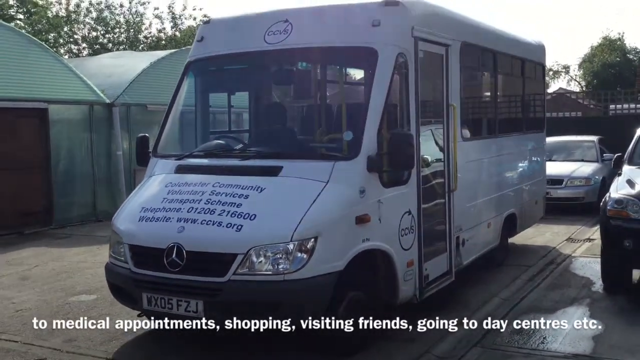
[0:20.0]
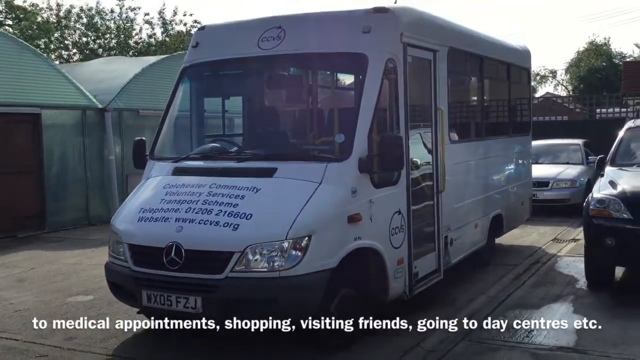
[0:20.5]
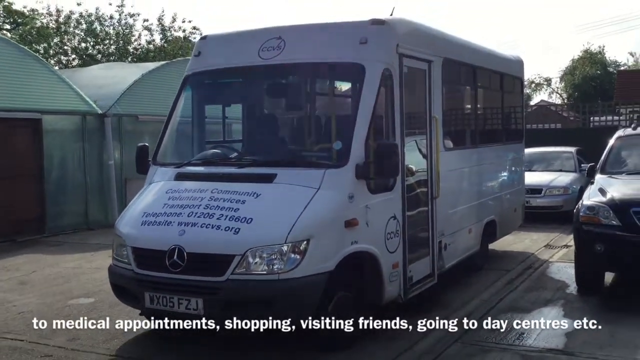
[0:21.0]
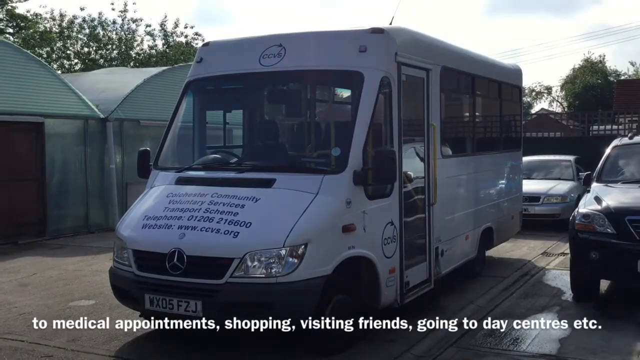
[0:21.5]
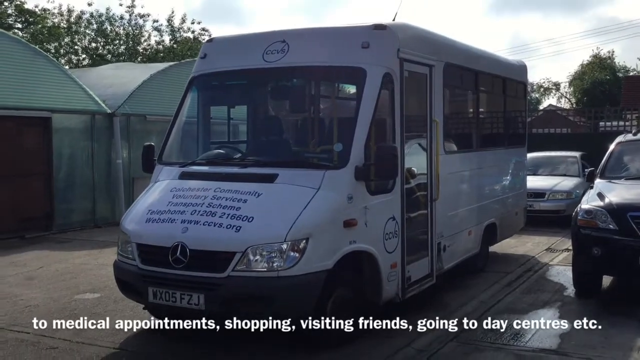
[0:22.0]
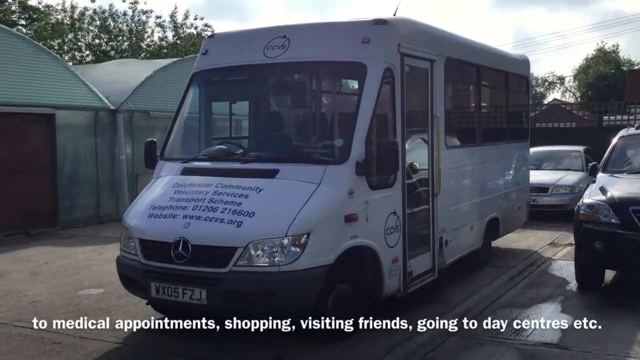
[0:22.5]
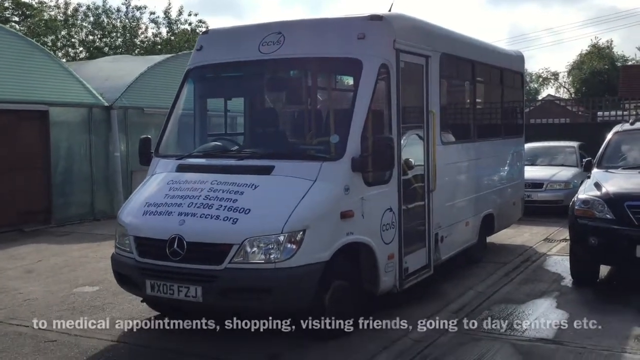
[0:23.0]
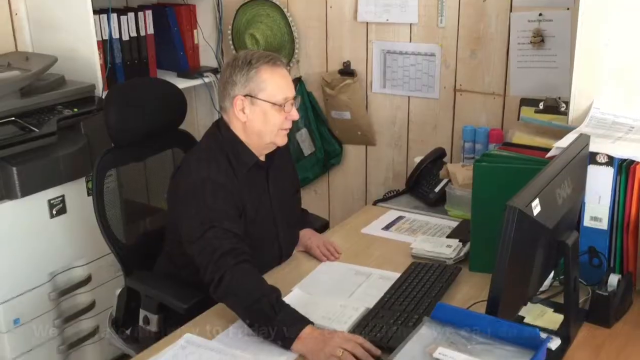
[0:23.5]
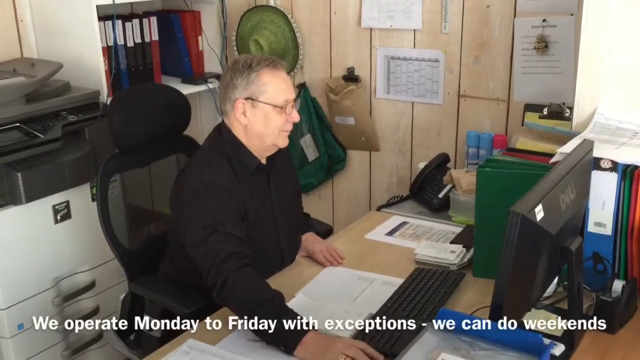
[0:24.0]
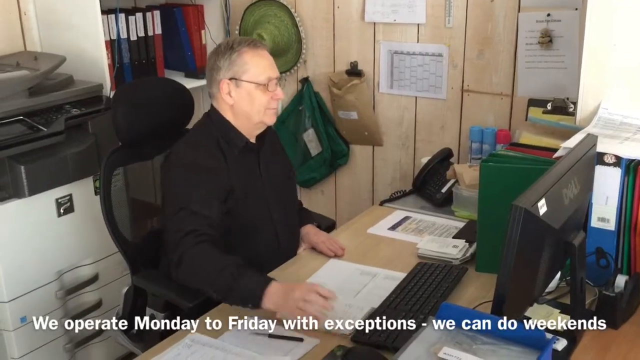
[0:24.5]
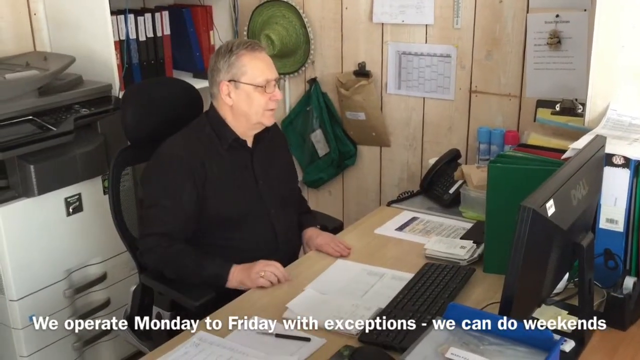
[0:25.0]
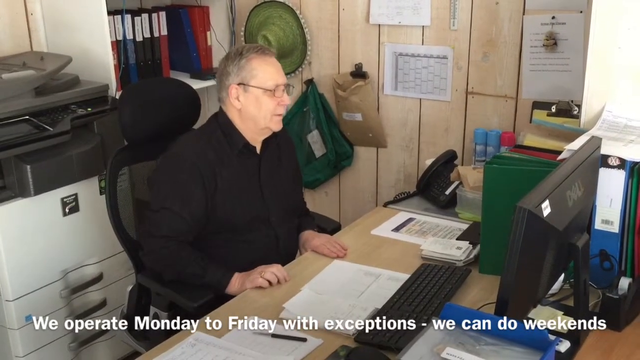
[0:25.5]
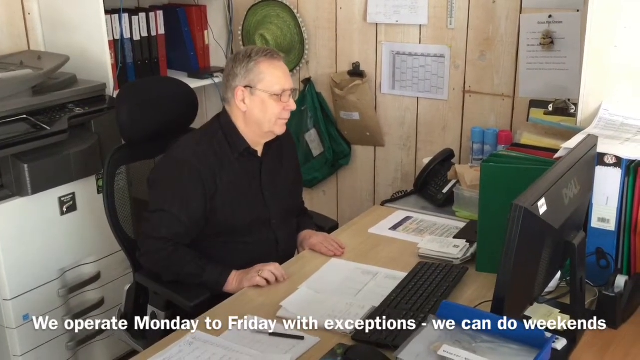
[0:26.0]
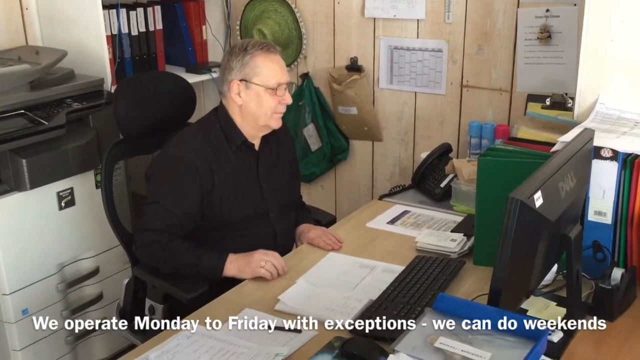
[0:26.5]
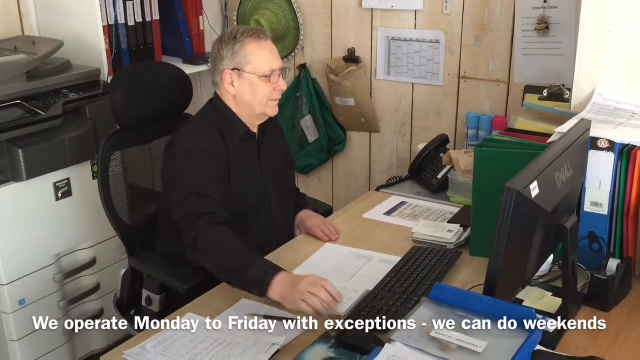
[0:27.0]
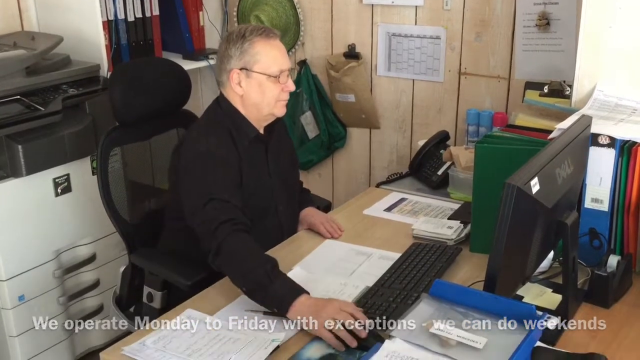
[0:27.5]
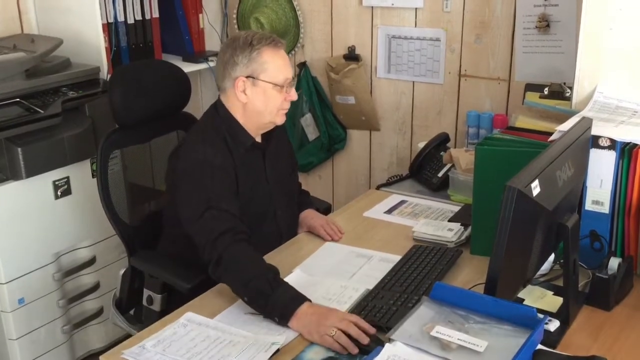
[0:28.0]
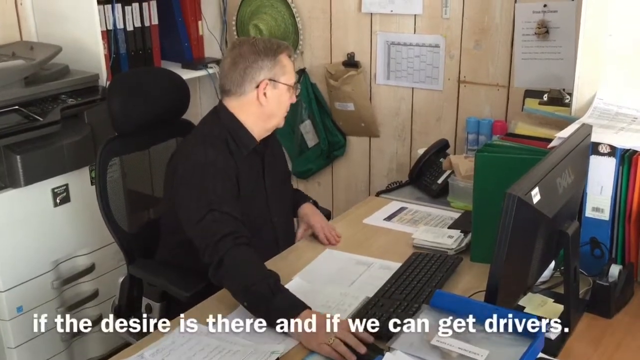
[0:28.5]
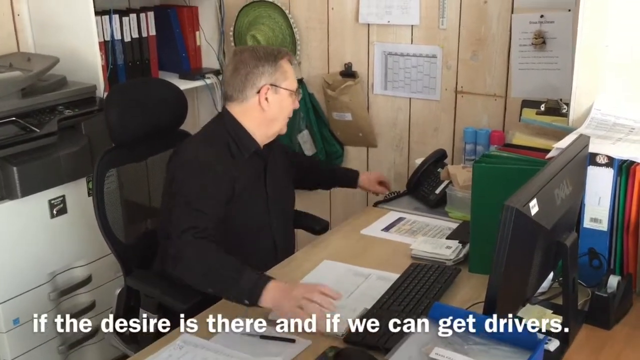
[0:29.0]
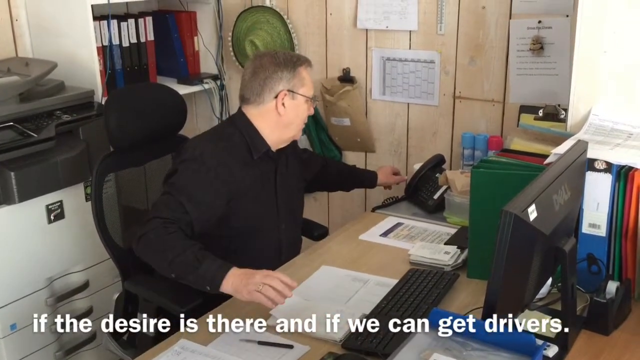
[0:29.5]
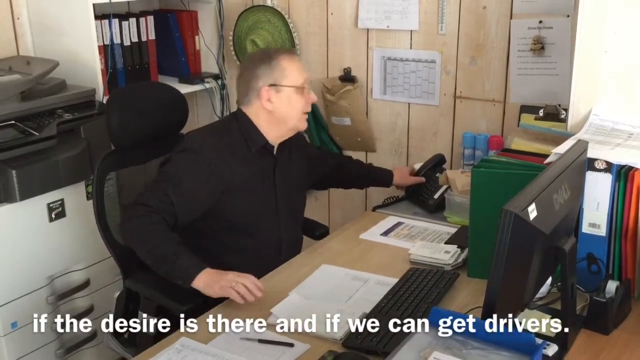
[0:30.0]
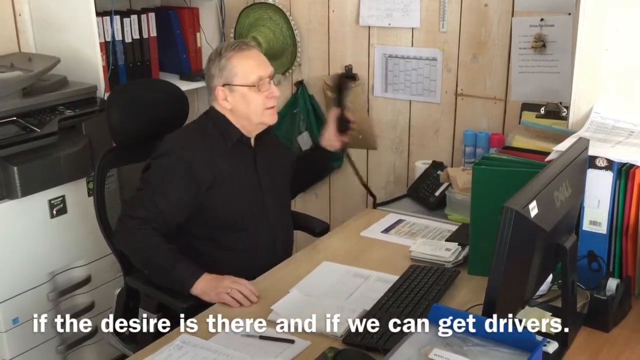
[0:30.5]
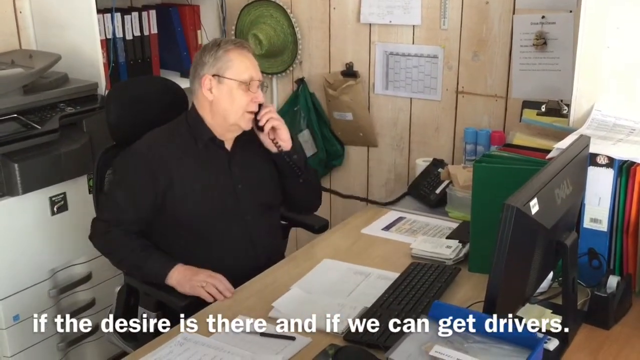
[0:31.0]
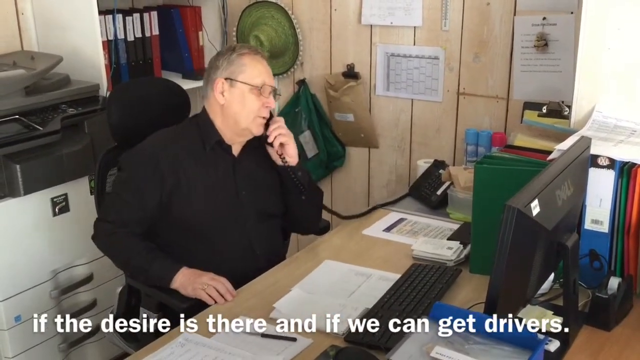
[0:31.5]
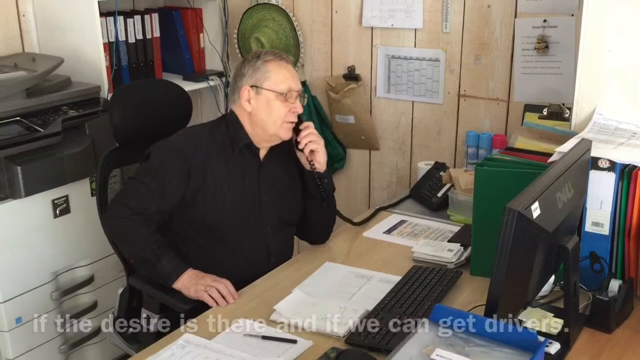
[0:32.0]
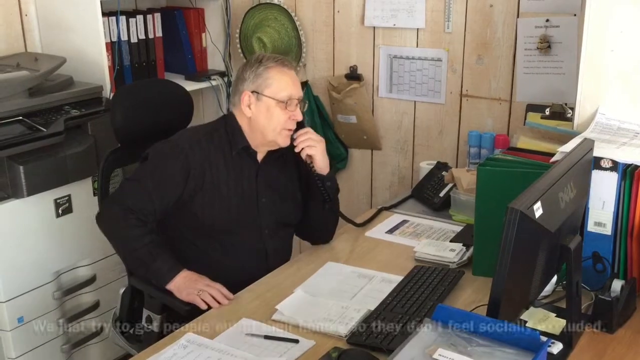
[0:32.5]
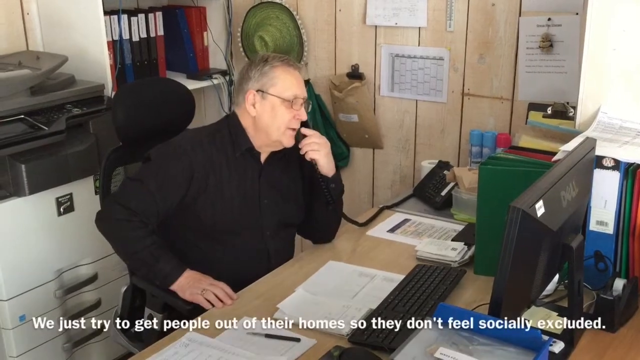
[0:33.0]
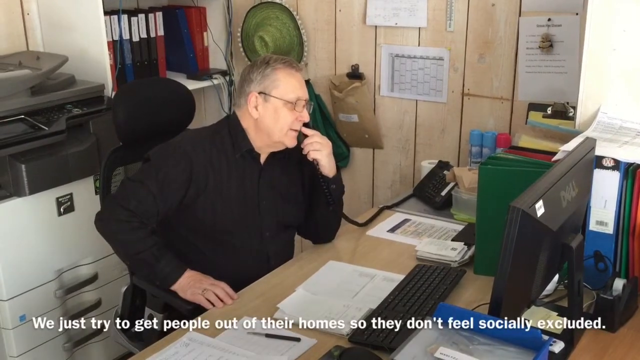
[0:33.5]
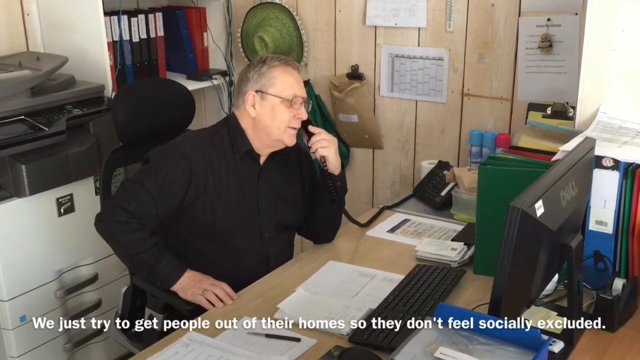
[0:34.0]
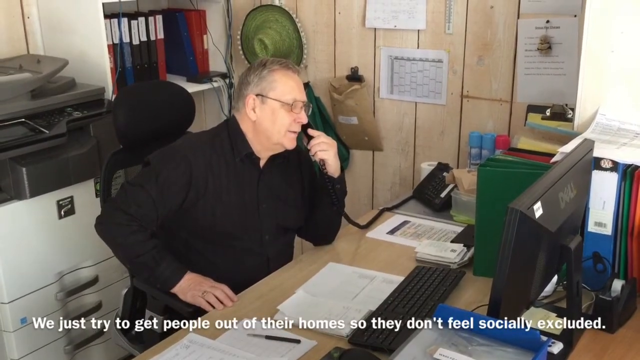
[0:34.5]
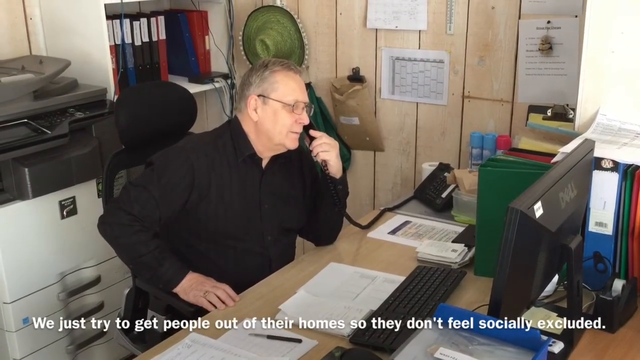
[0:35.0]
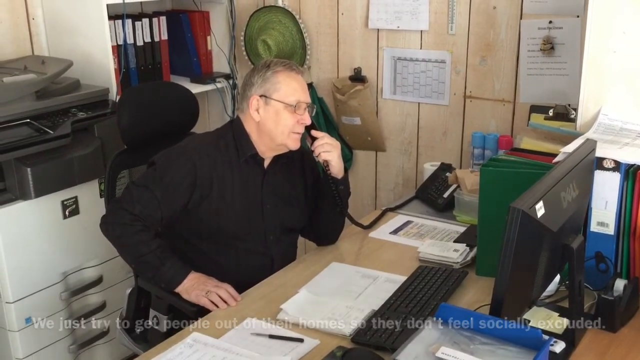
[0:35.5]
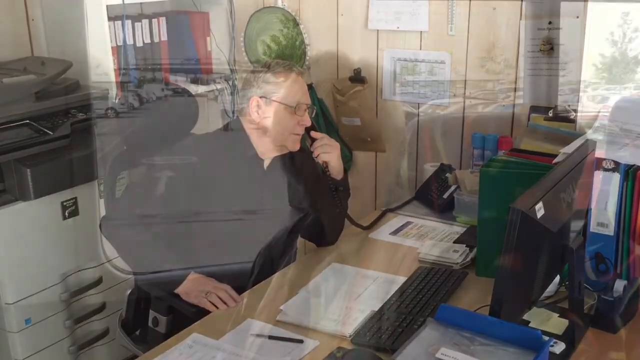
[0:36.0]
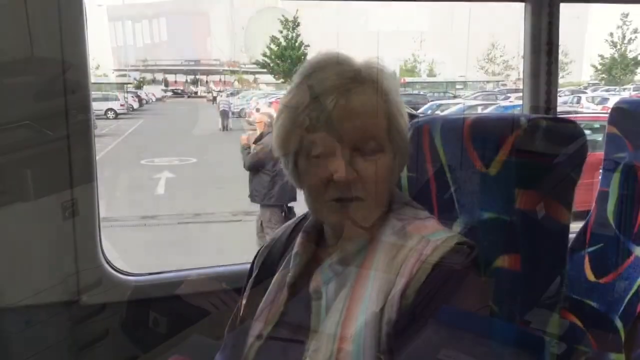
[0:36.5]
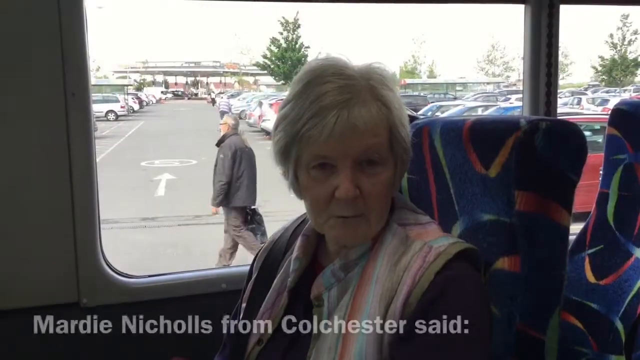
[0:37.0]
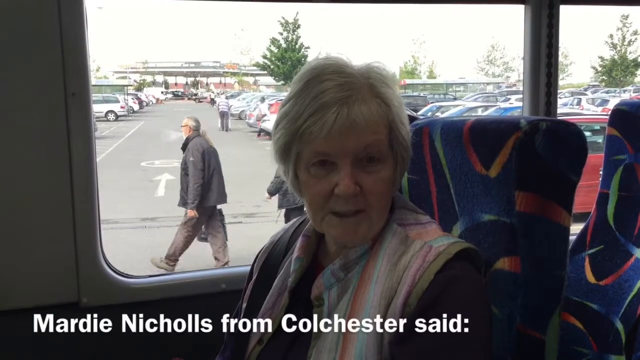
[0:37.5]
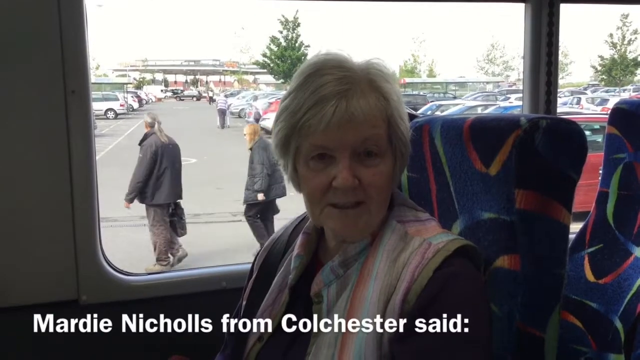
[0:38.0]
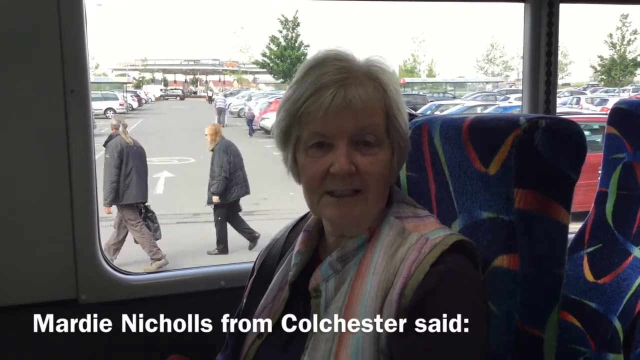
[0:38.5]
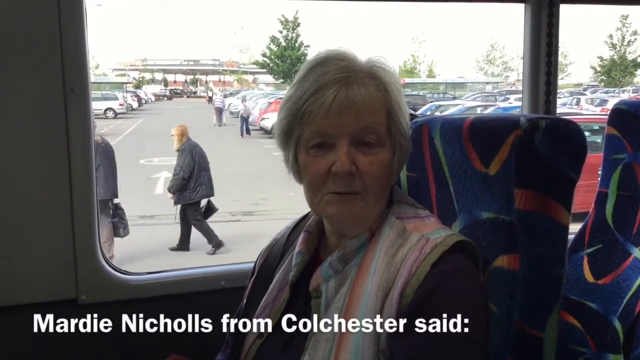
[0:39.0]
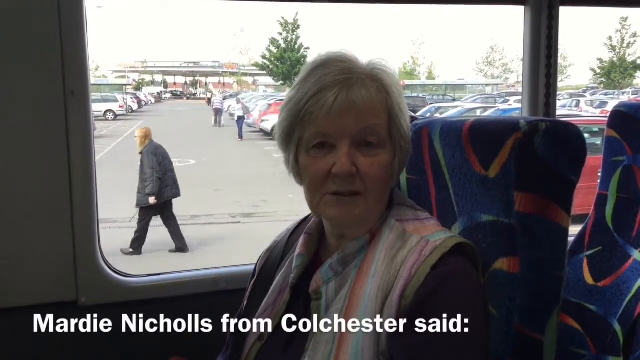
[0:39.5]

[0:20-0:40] A large, white, rectangular Mercedes Sprinter van is parked on a small street. Text on the front hood reads "Colchester Community Voluntary Services Transport Scheme", followed by the telephone number "012-062-16600" and the website "www.cvs.org". White text at the bottom of the screen reads "to medical appointments, shopping, visiting friends, going to day centers, etc." The scene changes to an older man with glasses and grayish brown hair sitting at a desk, working on a computer. He wears a black button-down shirt. He moves the mouse, stares at the screen, then picks up the phone on his left side, holds it to his ear and begins speaking. A white caption at the bottom reads "we operate Monday to Friday with exceptions - we can do weekends if the desire is there and if we can get drivers. We just try to get people out of their home so they don't feel socially excluded." The scene changes again to what looks like the inside of a bus, with blue seats printed with red, green and orange ribbon-like designs. An older woman with short grayish blonde hair is sitting by the window, speaking to someone who is interviewing her. Text at the bottom of the screen reads "Mardie Nichols from Colchester said:". Outside the window there appears to be a large grocery store parking lot, with many parked cars and people walking back to their cars with bags and shopping carts.